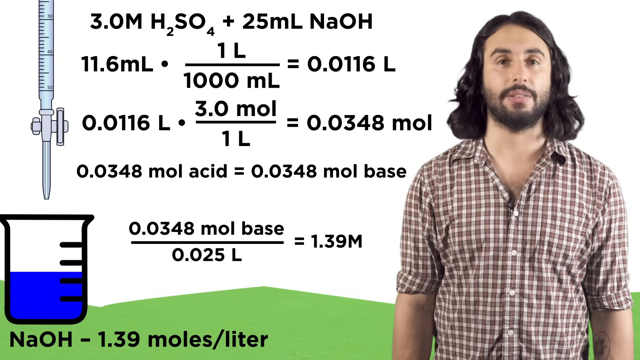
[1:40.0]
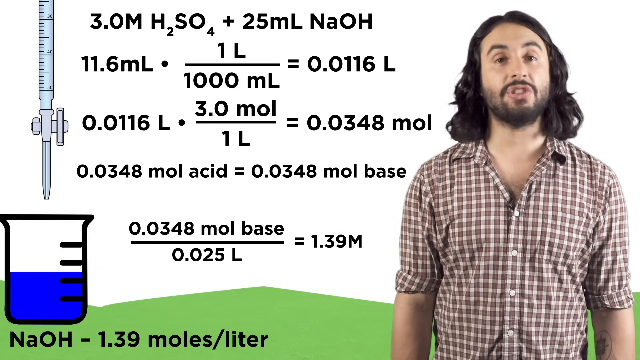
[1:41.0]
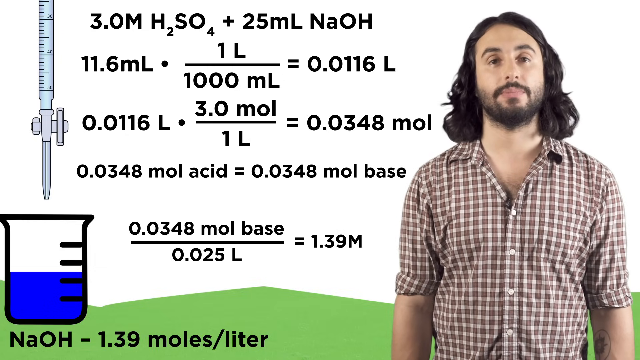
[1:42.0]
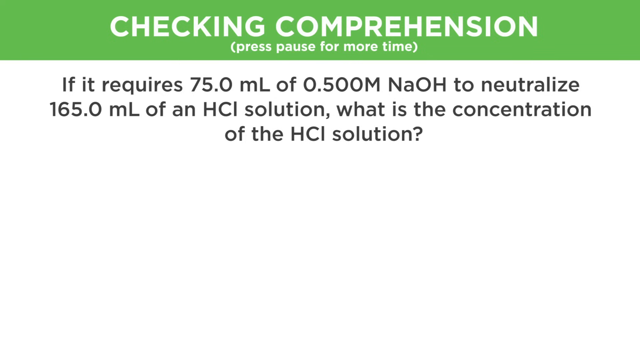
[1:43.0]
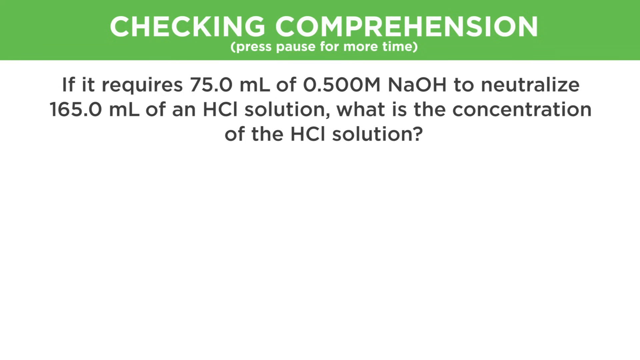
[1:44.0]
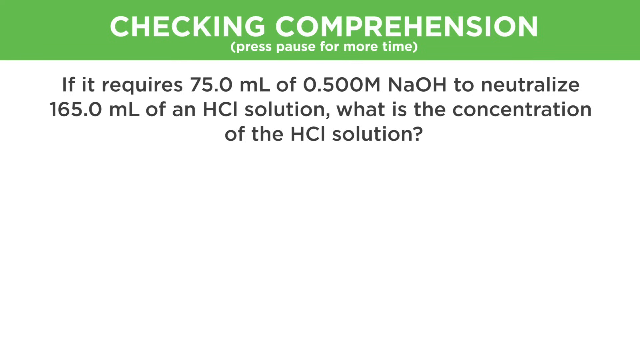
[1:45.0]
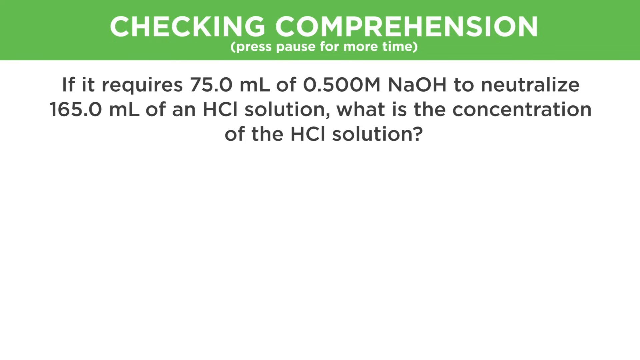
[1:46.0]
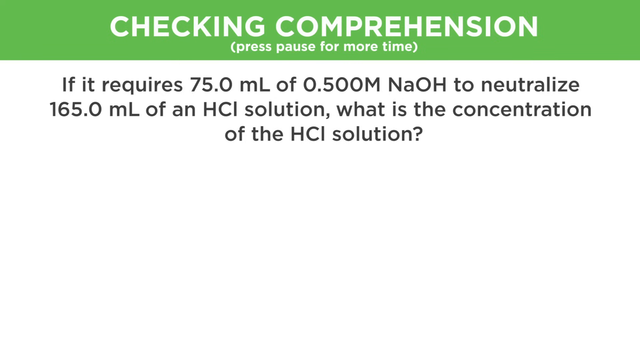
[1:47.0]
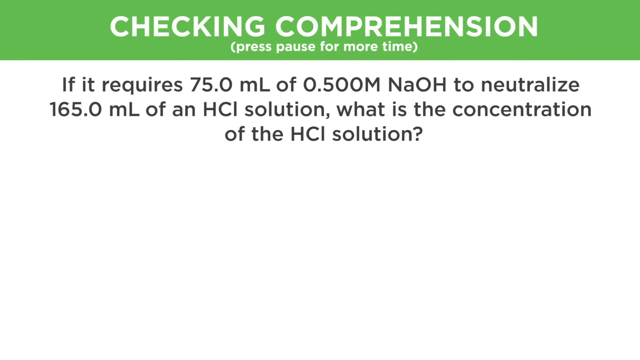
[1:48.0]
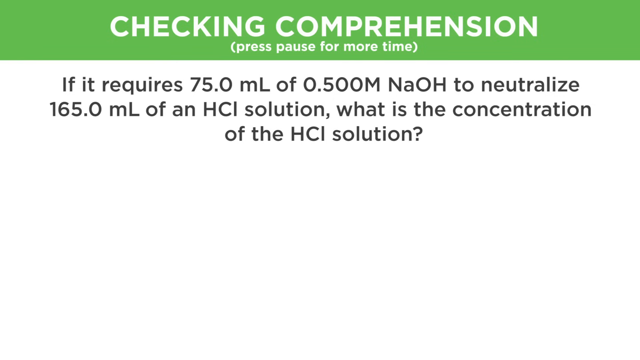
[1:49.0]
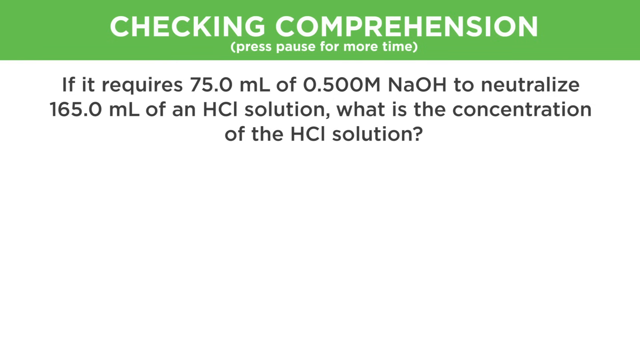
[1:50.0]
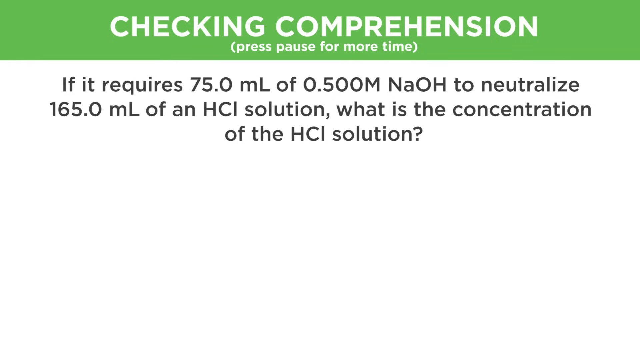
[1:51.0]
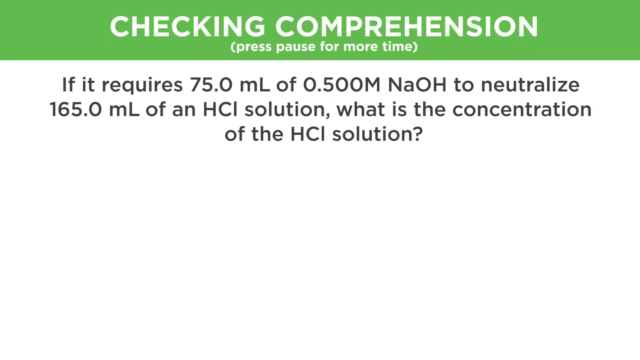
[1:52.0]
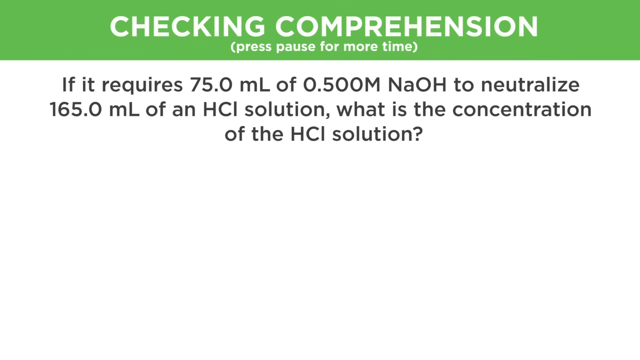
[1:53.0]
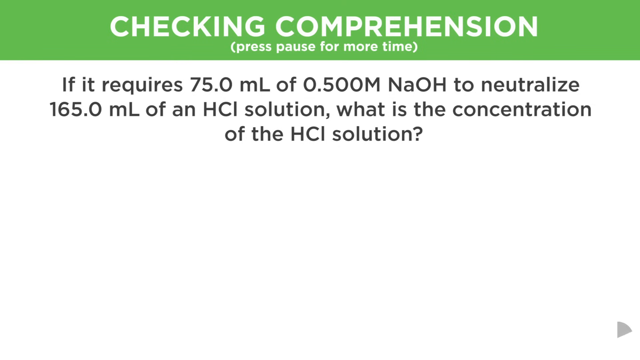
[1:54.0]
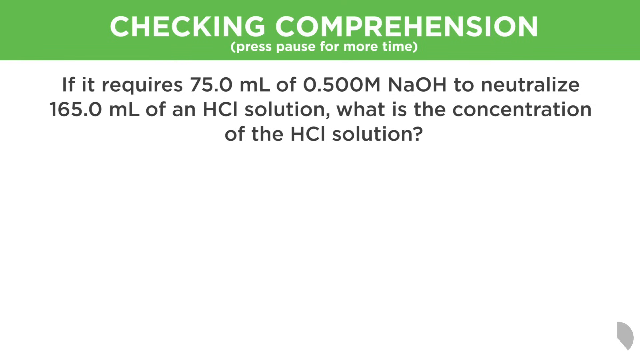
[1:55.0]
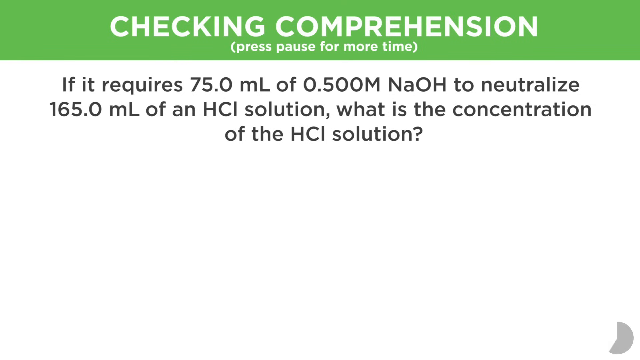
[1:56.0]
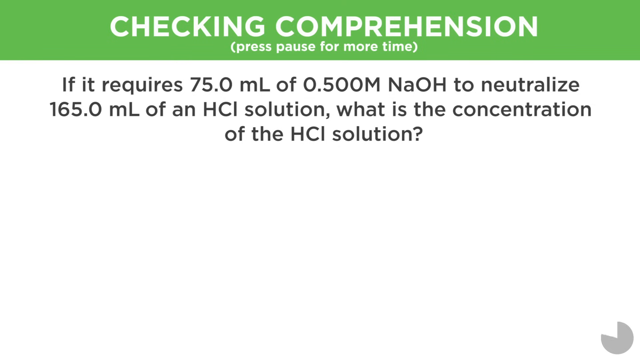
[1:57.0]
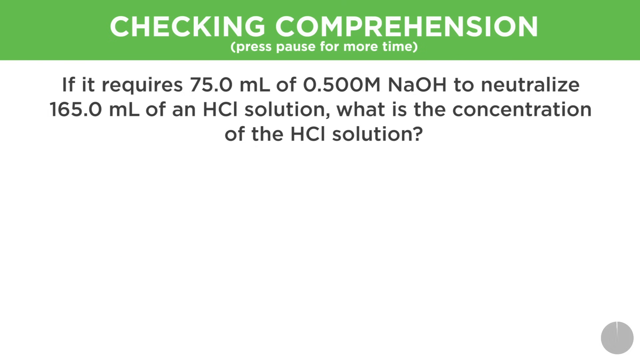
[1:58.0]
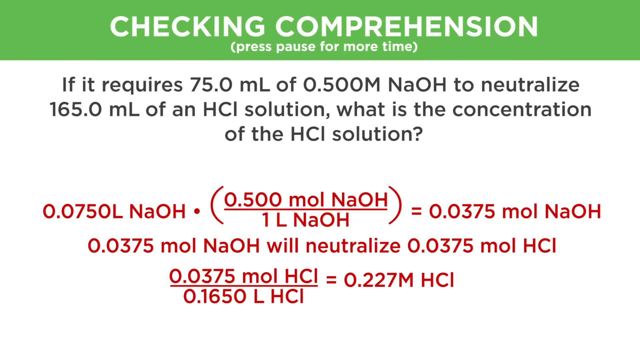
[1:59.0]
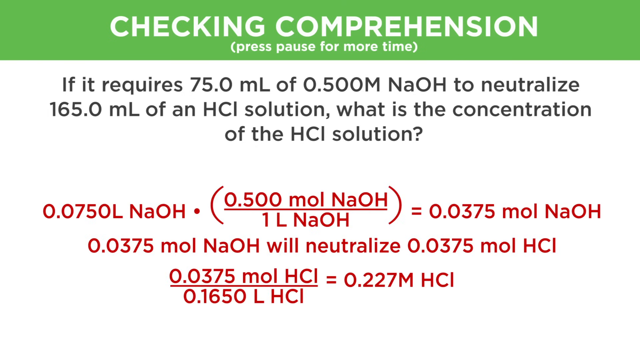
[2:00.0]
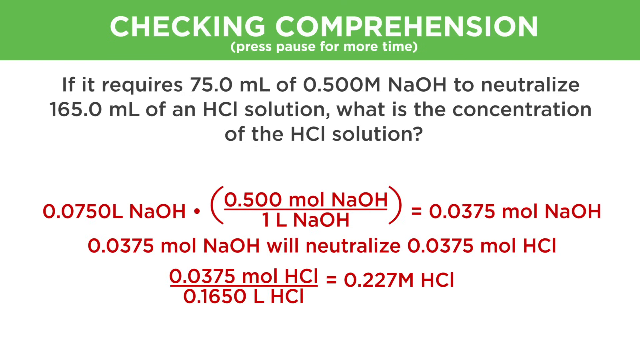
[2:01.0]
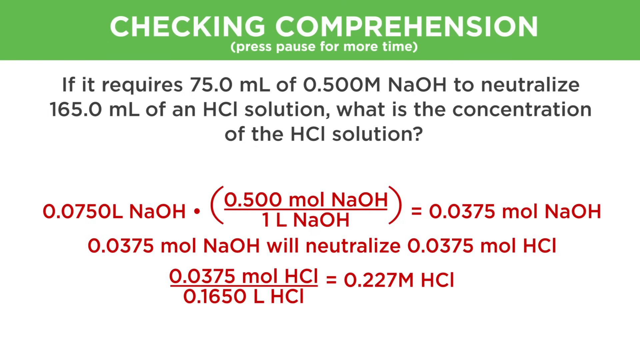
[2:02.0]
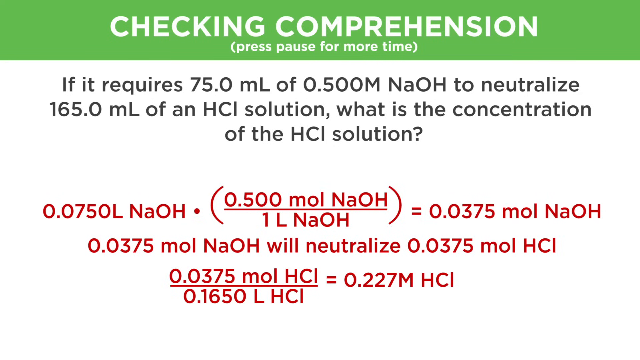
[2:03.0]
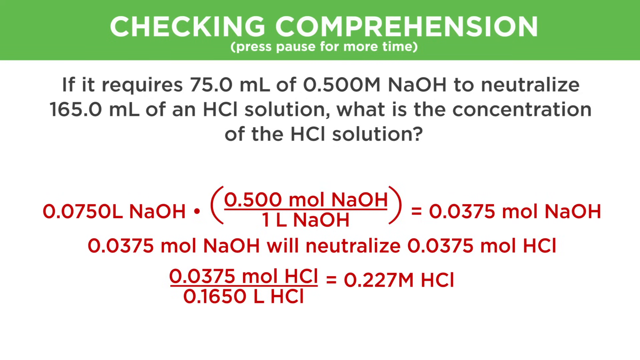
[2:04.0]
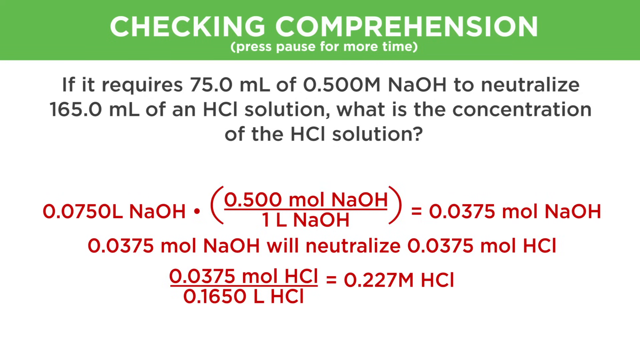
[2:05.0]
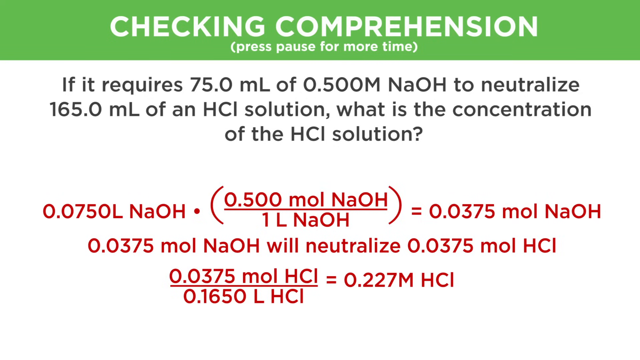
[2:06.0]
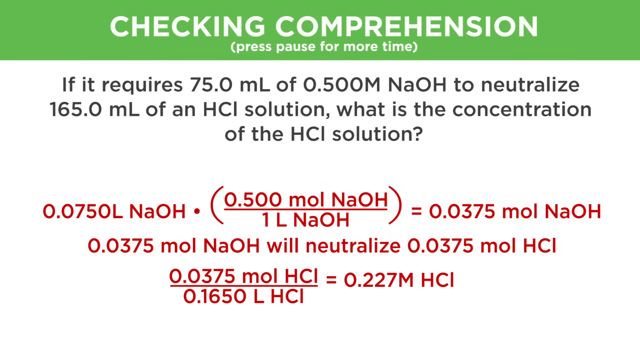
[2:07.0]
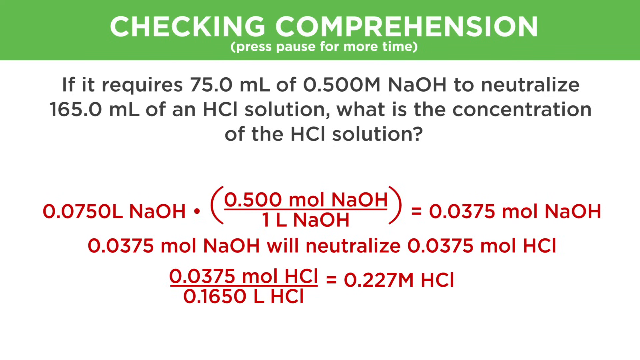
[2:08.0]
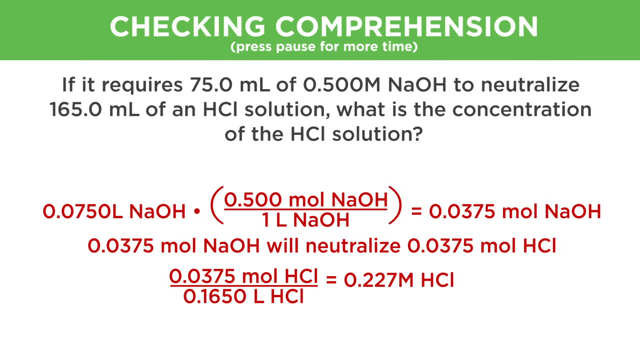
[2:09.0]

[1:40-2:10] A formula is shown step by step, demonstrating how to calculate the concentration and find the answer. The man stands next to the formula and looks at text that includes "press pause for more time" along with a question, apparently asking viewers to pause and calculate the answer. The answer then appears, with every calculation step and its numbers shown in detail and the final answer written in red.